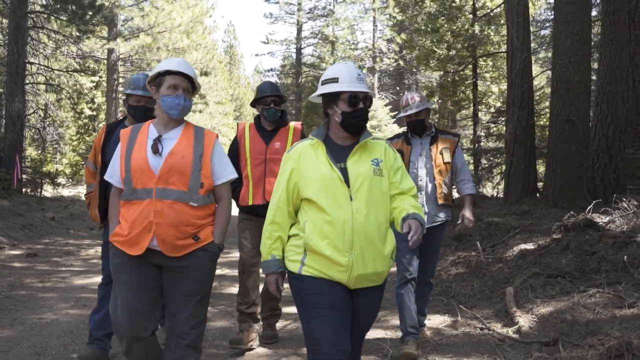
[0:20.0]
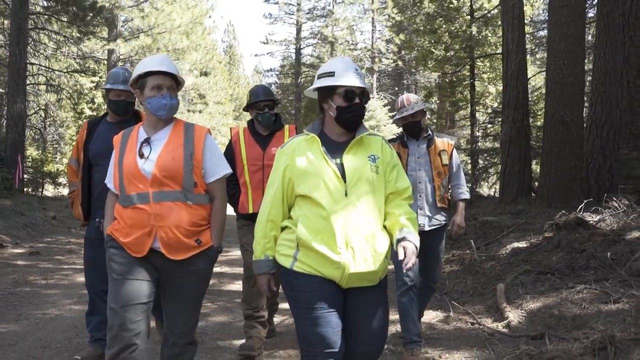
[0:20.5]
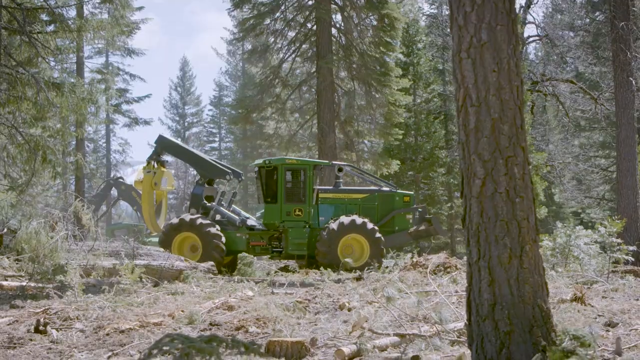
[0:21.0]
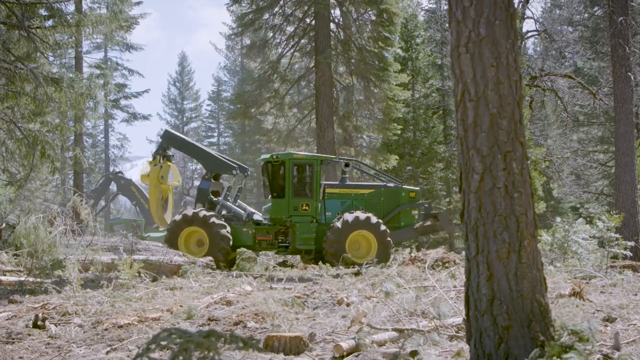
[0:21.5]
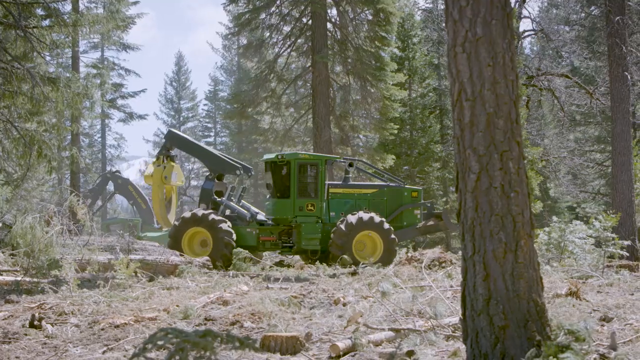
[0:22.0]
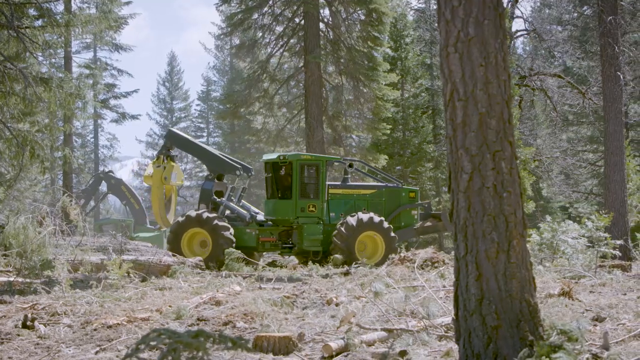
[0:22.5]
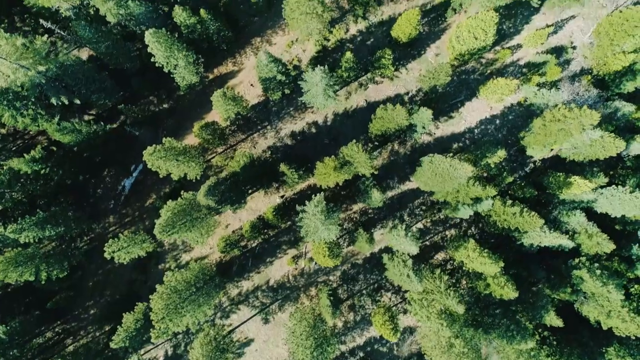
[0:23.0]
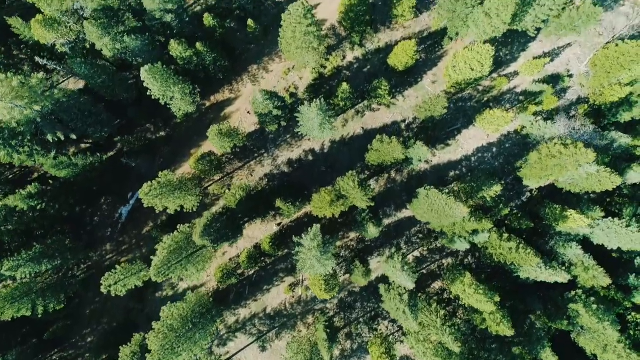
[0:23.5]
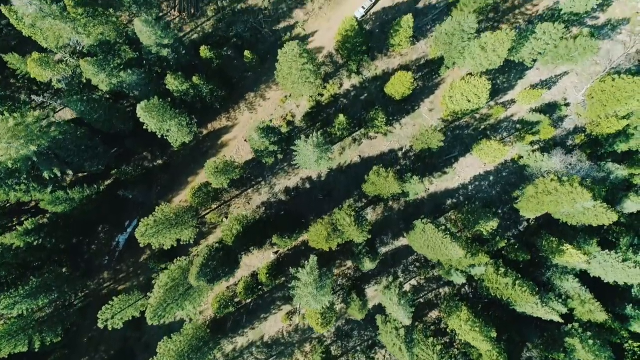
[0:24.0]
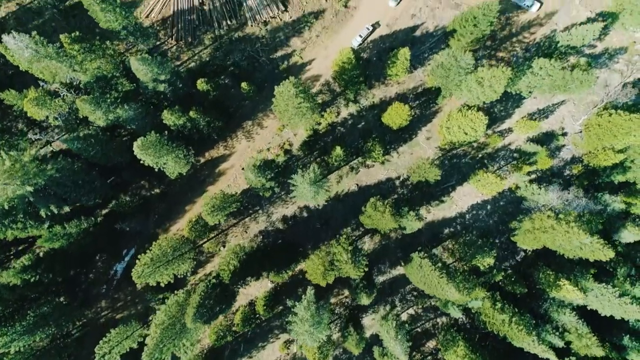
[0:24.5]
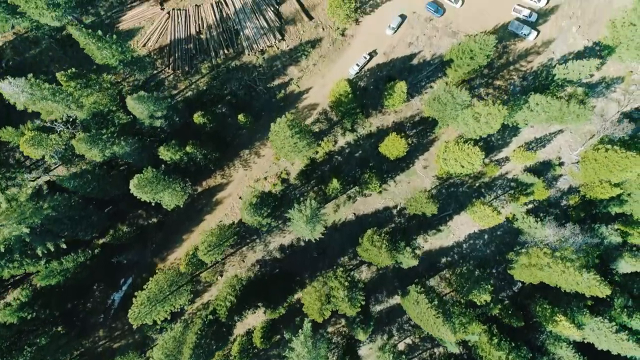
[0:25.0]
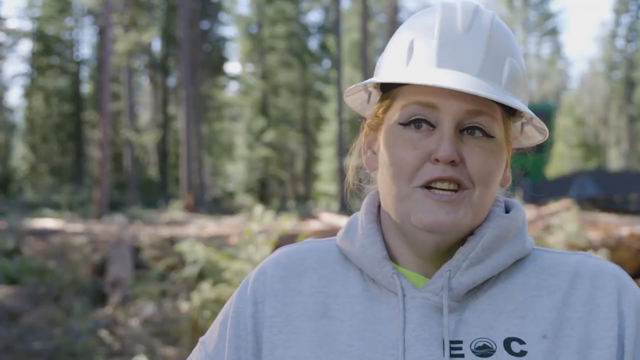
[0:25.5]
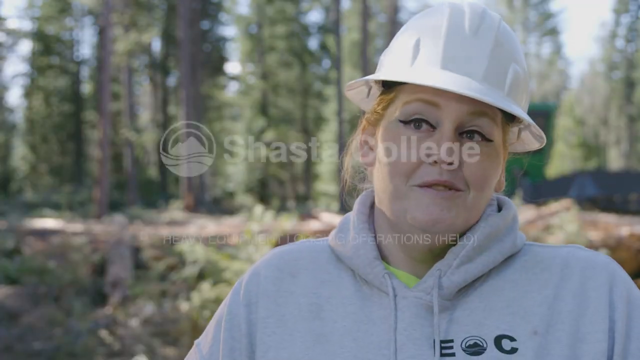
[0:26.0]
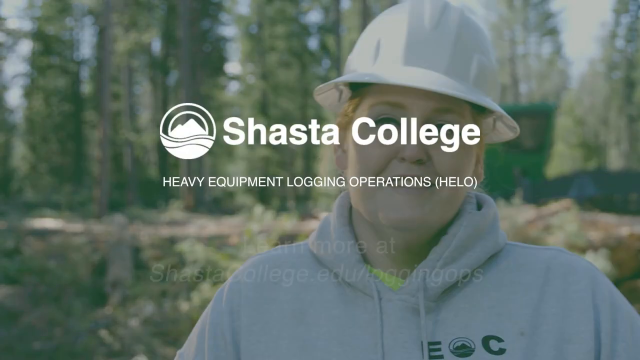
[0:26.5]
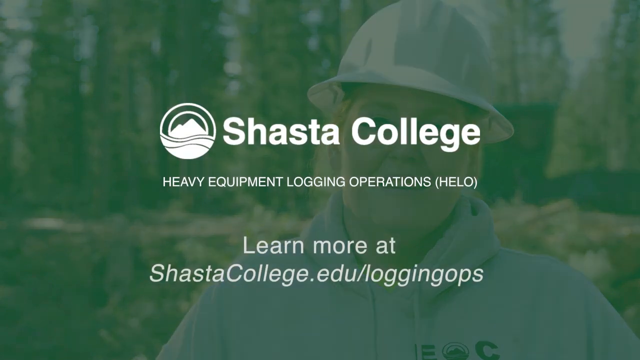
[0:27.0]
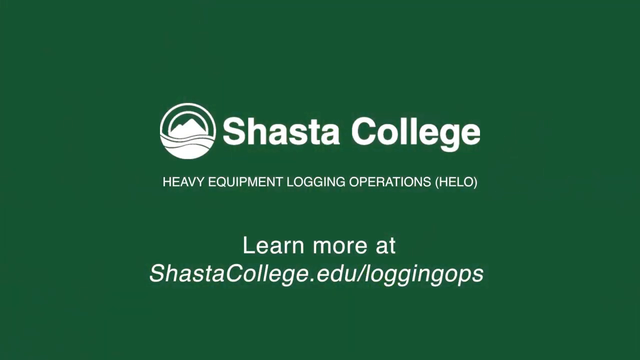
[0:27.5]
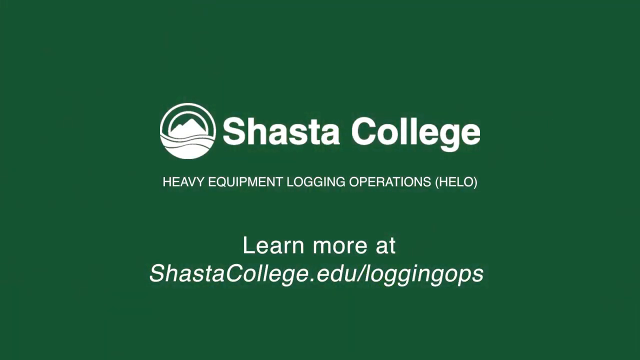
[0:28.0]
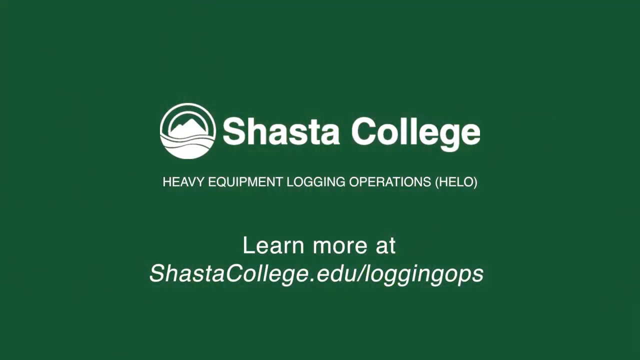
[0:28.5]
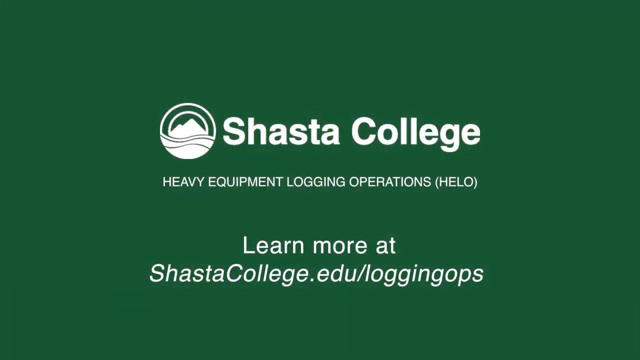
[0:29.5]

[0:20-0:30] Five people walk along a large trail through a forest surrounded by green evergreens. They all wear hard hats of different colors and bright yellow and orange vests. The video cuts to a green John Deere tractor working in the forest, moving forward. Next, an aerial view looks directly down at the forest, showing the spaces between the trees. It then cuts to the lady with the clipboard, Stephanie, who says something at the end. The Shasta College logo appears, with their website at the bottom for more information. The lady disappears from the screen, and the background turns a forest green color.